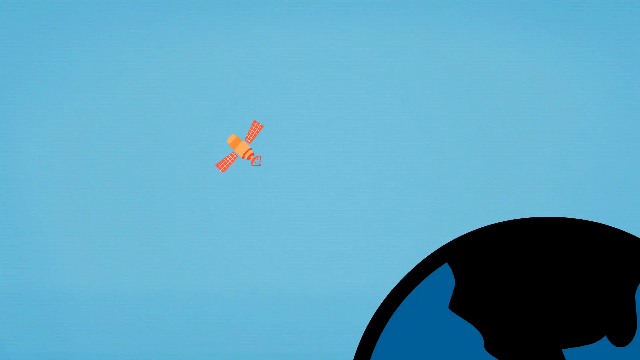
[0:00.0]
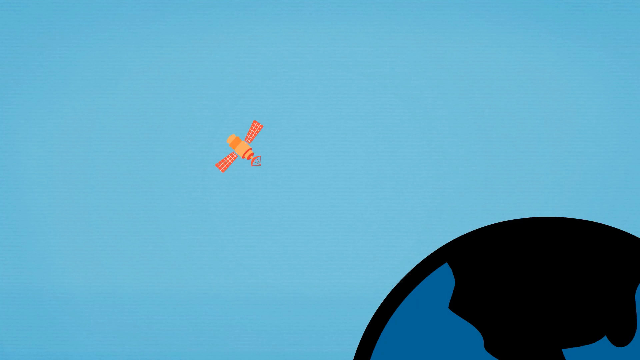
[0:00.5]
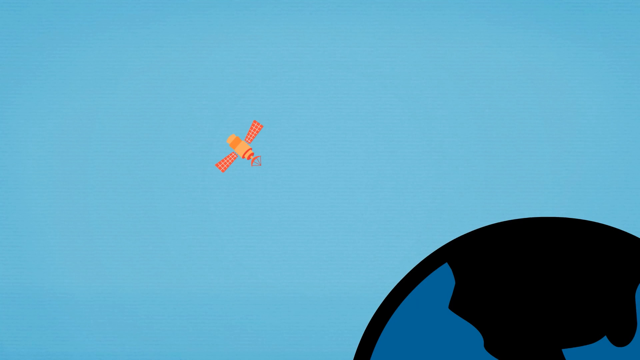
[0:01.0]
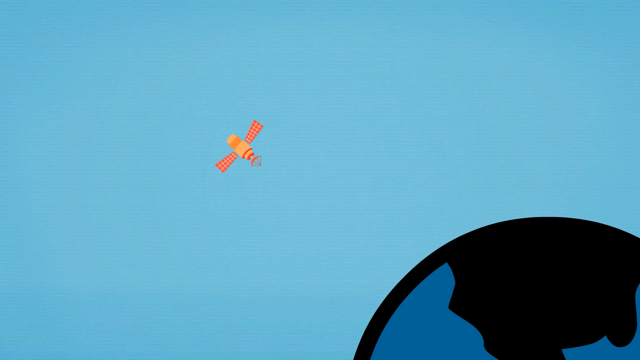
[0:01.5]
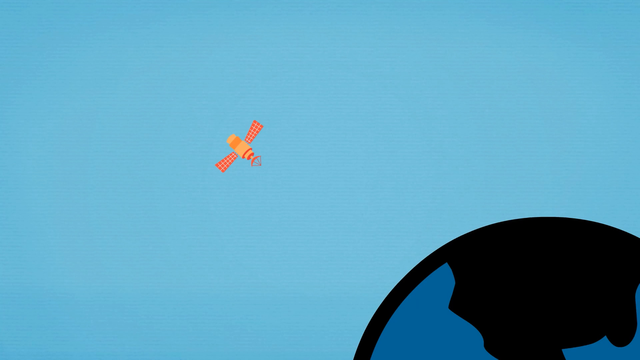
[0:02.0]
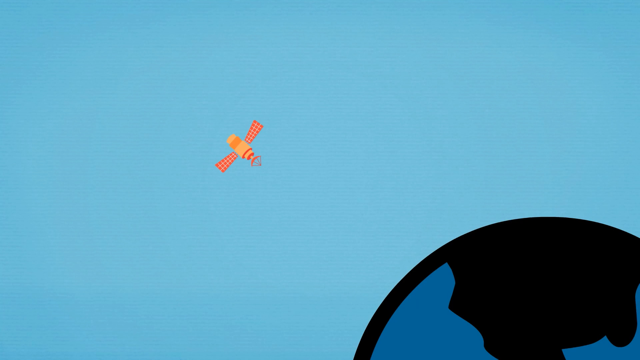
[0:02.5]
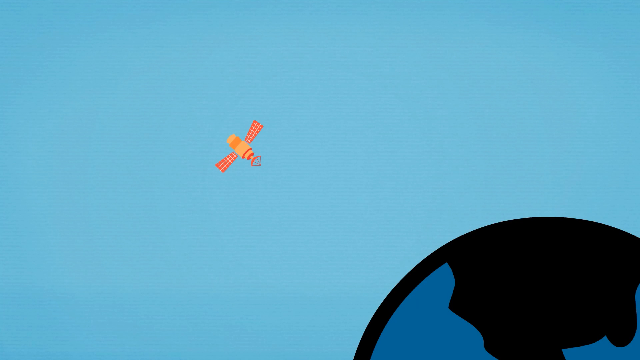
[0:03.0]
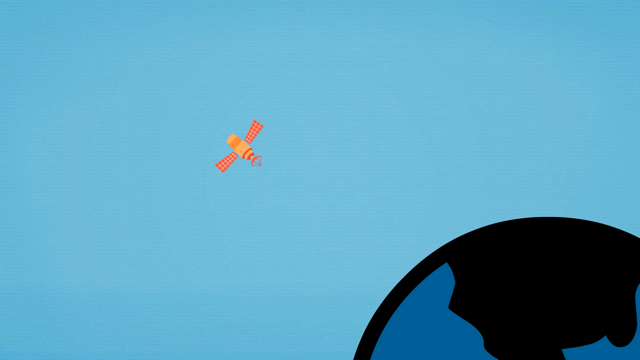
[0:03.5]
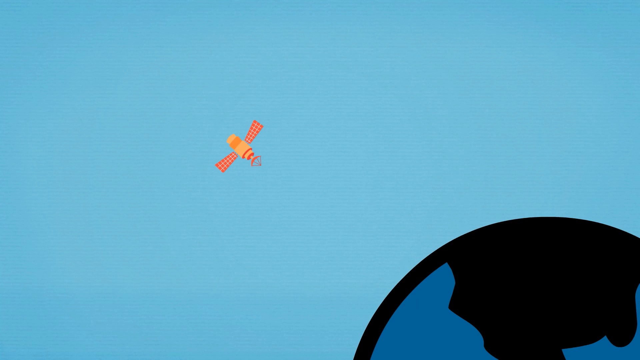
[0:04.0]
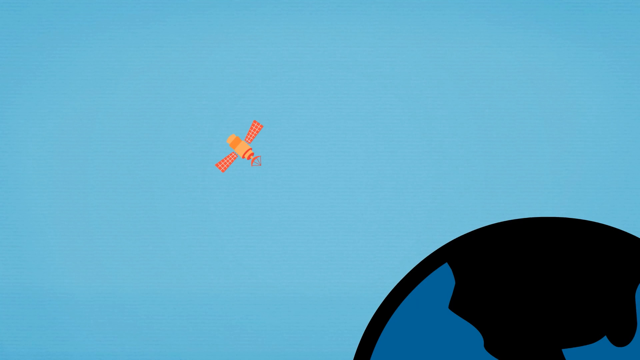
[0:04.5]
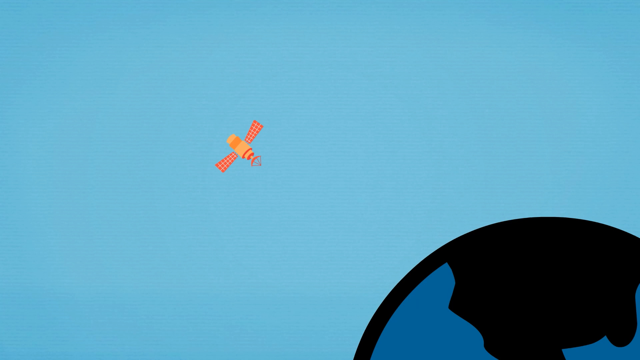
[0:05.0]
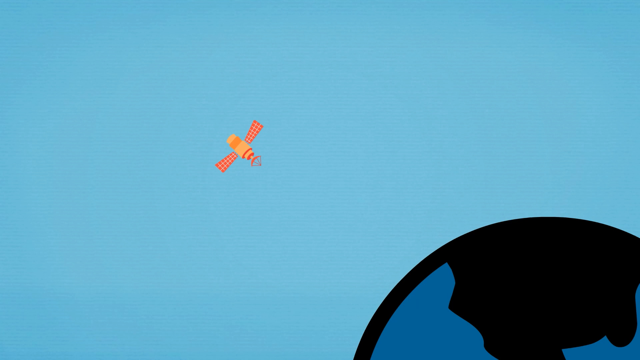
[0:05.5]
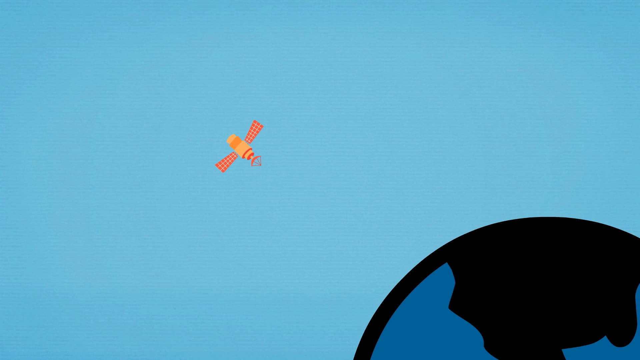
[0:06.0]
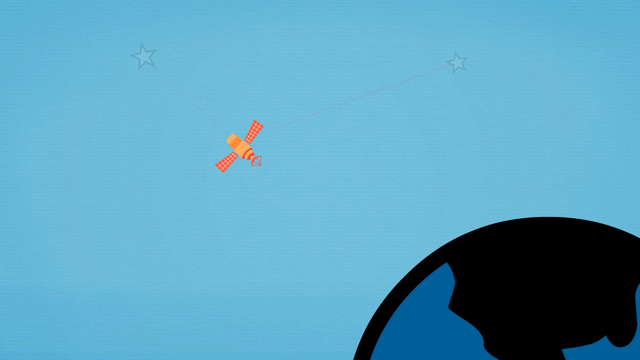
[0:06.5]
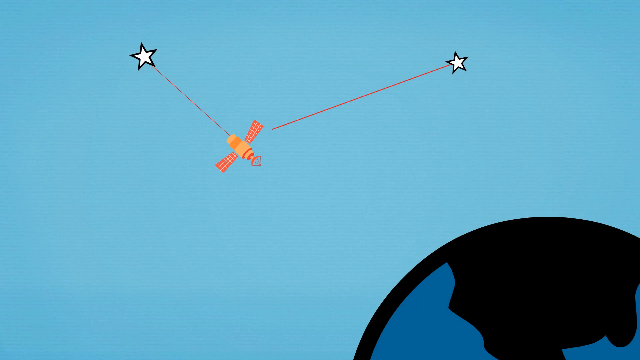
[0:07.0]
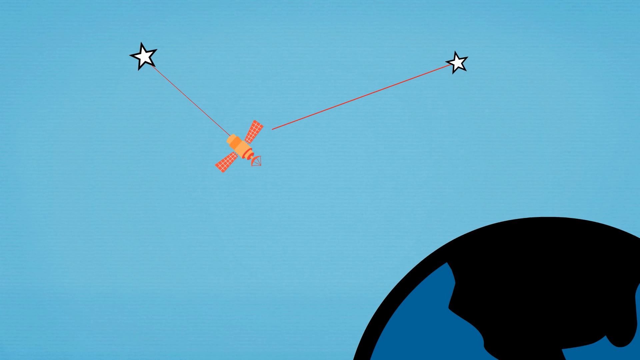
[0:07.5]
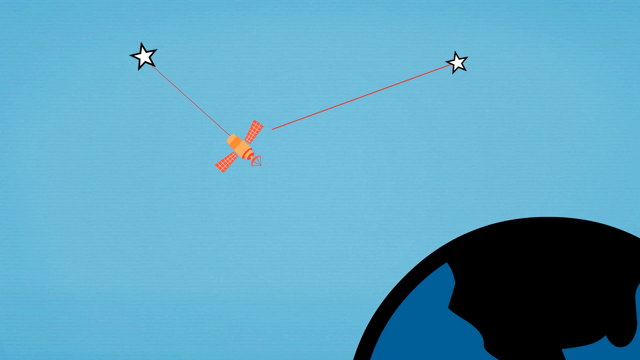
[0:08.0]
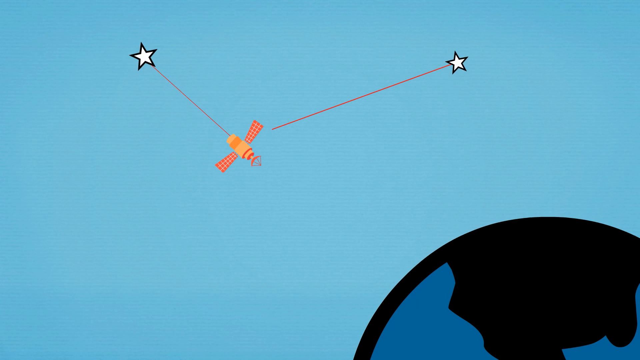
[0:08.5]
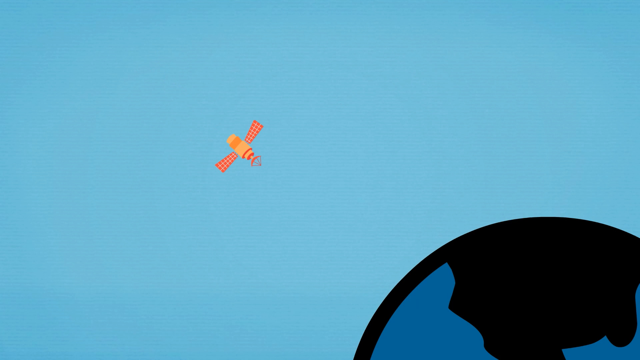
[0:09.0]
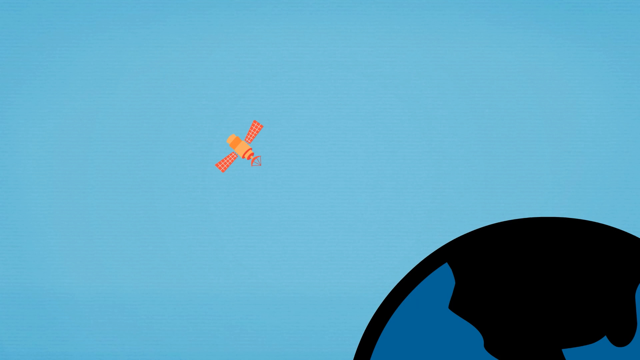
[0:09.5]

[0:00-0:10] The video opens on a blue background with what at first looks like an orange bee with wings in the center of the screen, but it is actually an orange satellite. In the lower right corner is half of a round black sphere, looking as if it is halfway out of sight. On the black sphere there is some blue, perhaps meant to be land on a planet. Nothing is animated until suddenly two lines with stars at their ends attach themselves to the orange satellite, as if communicating with someone in space.